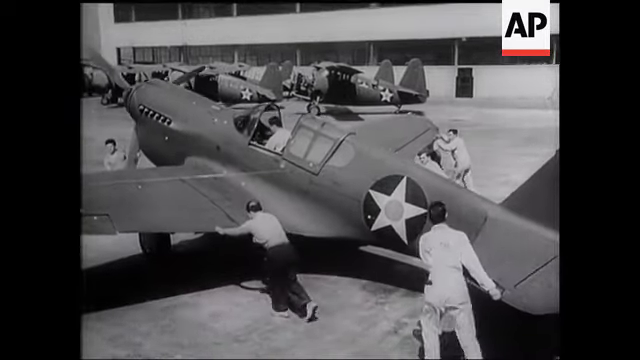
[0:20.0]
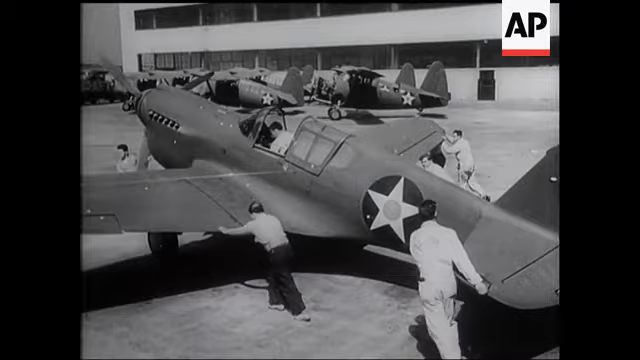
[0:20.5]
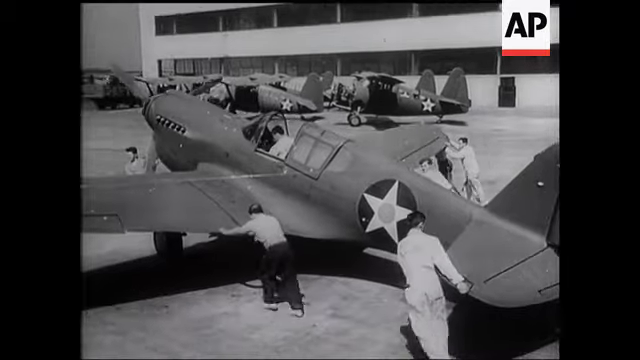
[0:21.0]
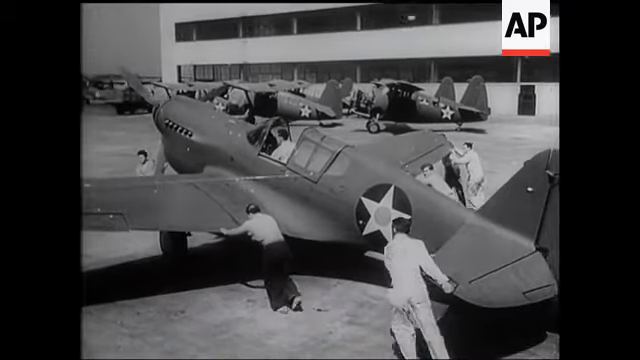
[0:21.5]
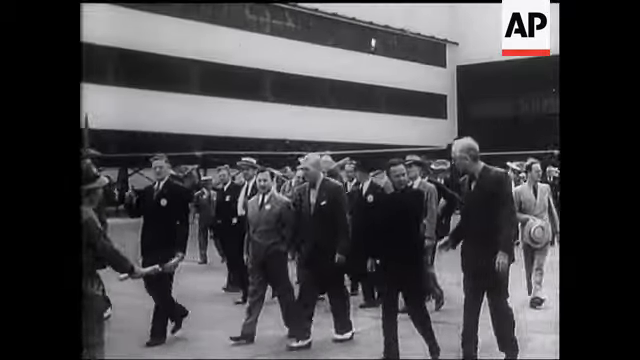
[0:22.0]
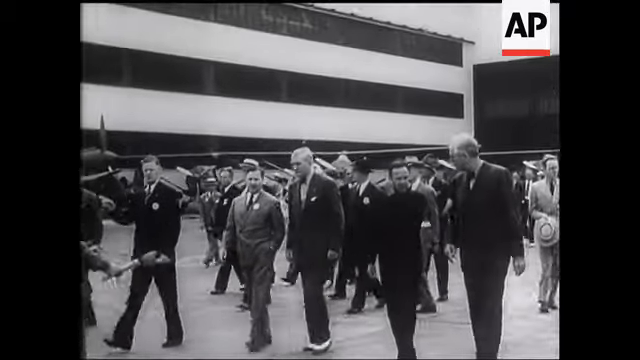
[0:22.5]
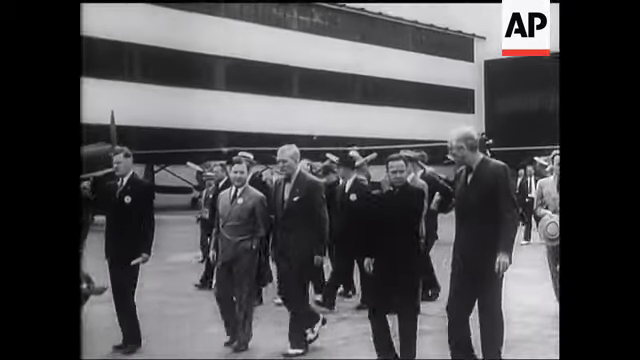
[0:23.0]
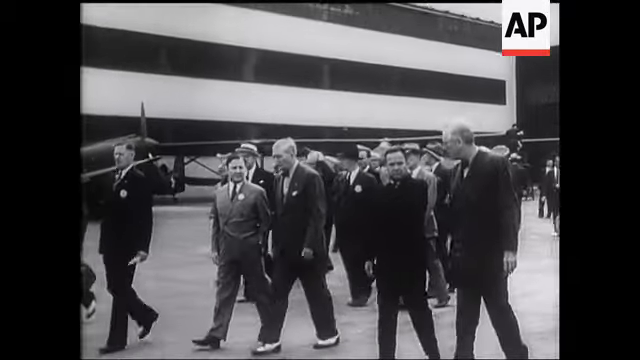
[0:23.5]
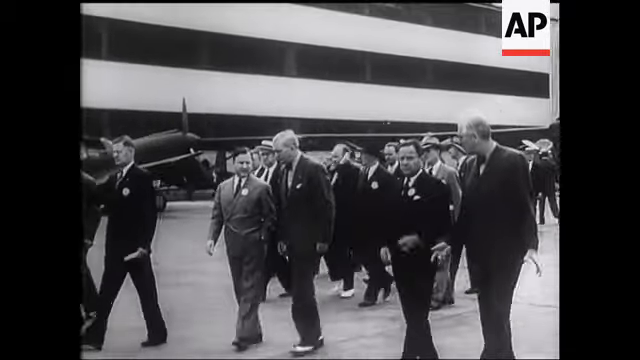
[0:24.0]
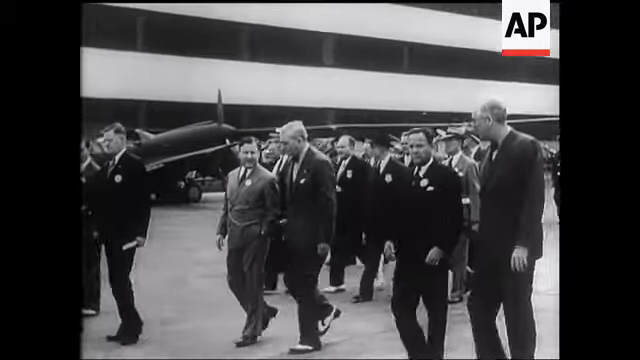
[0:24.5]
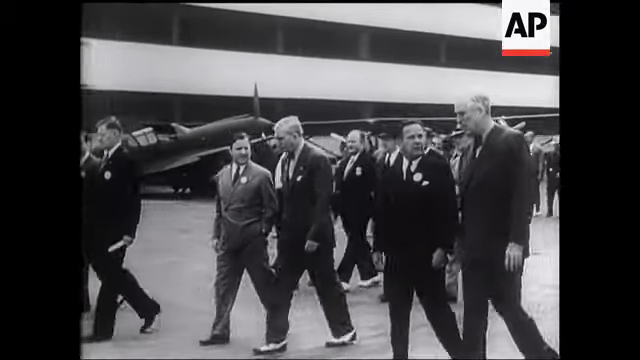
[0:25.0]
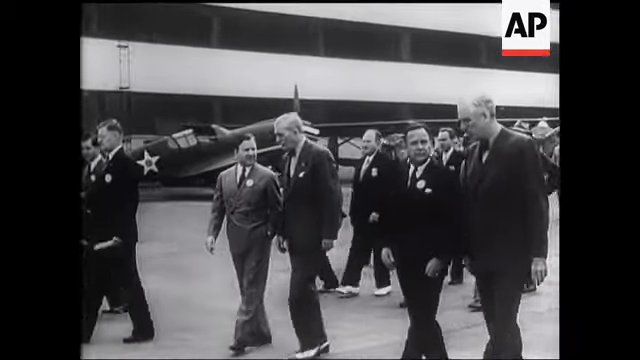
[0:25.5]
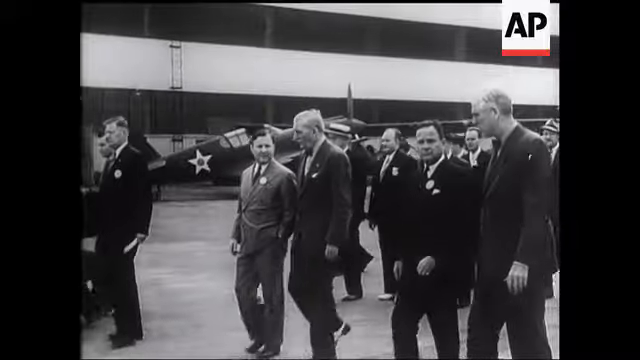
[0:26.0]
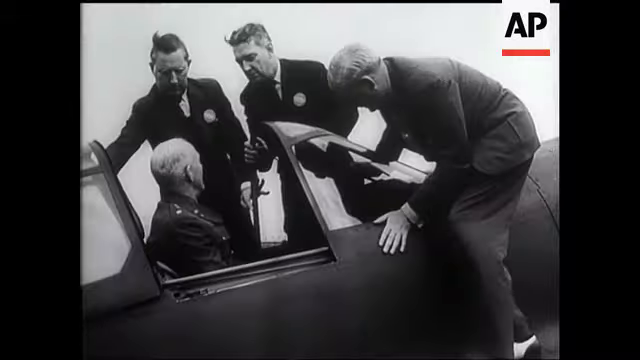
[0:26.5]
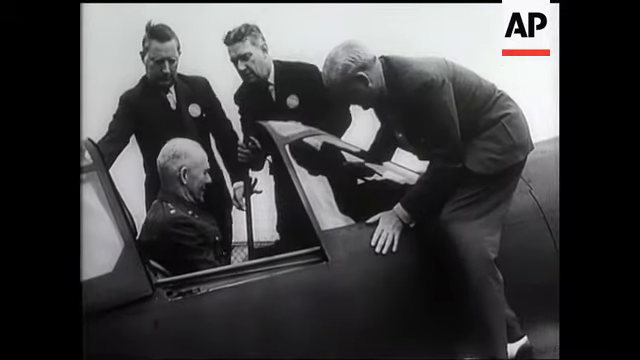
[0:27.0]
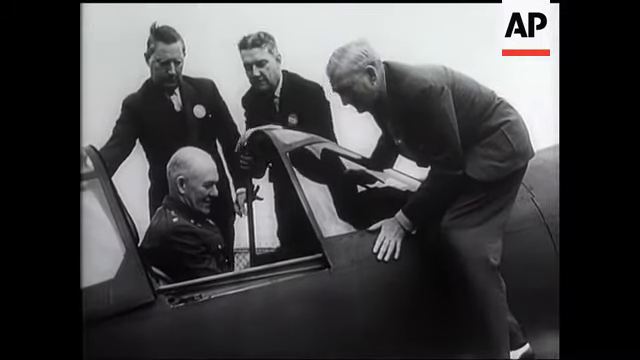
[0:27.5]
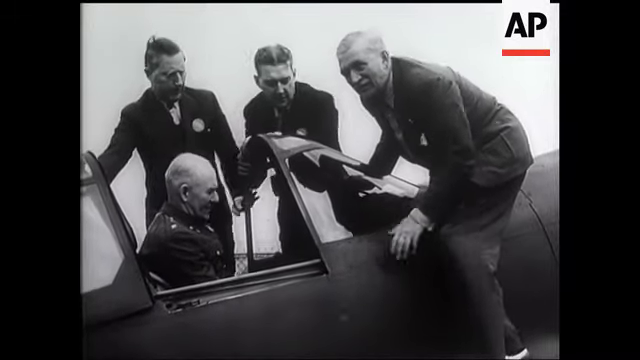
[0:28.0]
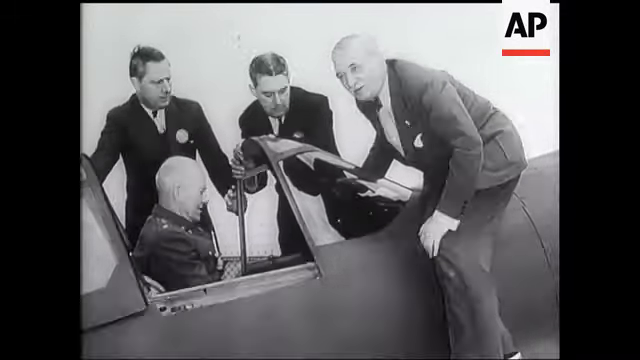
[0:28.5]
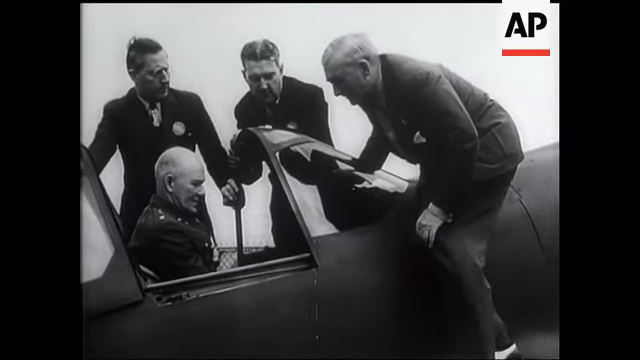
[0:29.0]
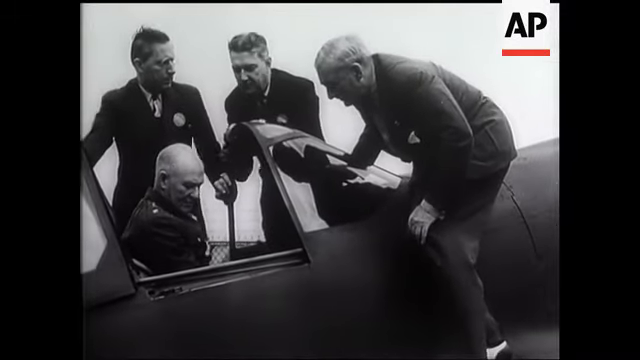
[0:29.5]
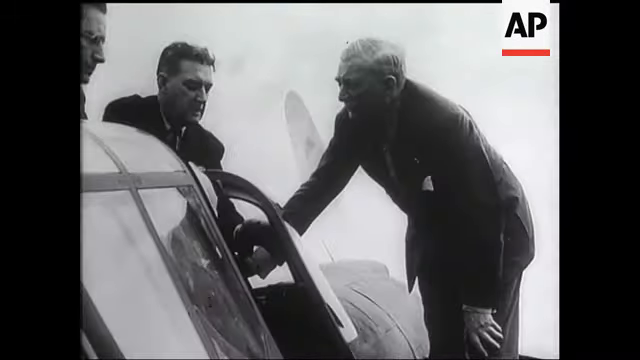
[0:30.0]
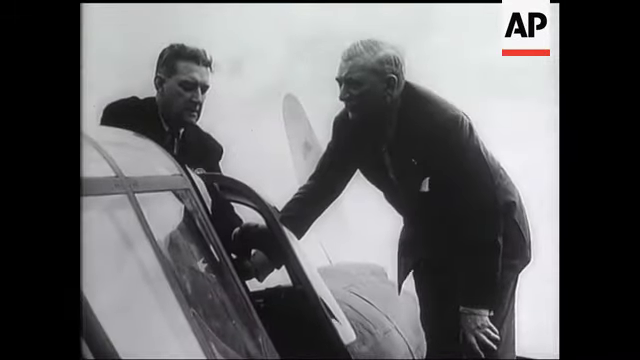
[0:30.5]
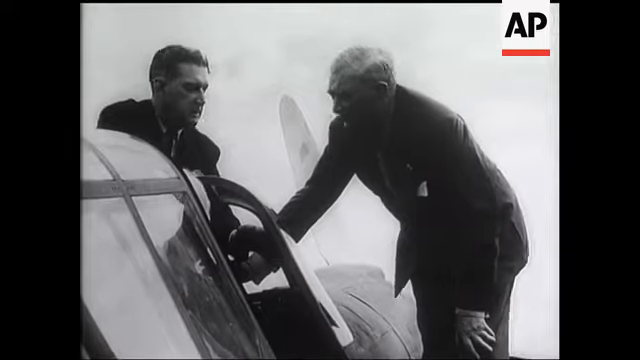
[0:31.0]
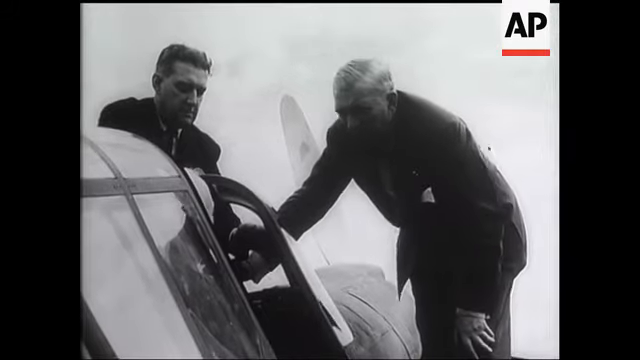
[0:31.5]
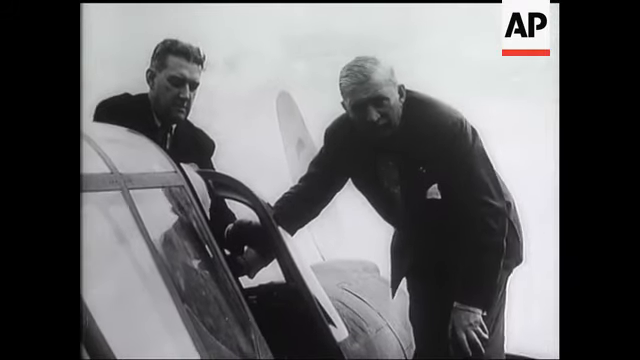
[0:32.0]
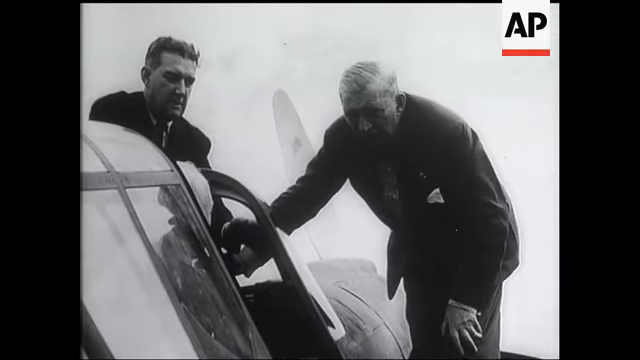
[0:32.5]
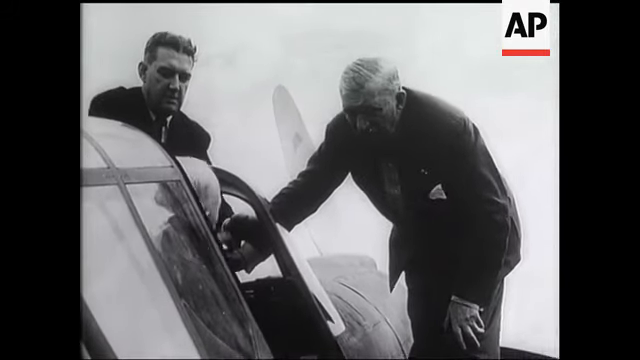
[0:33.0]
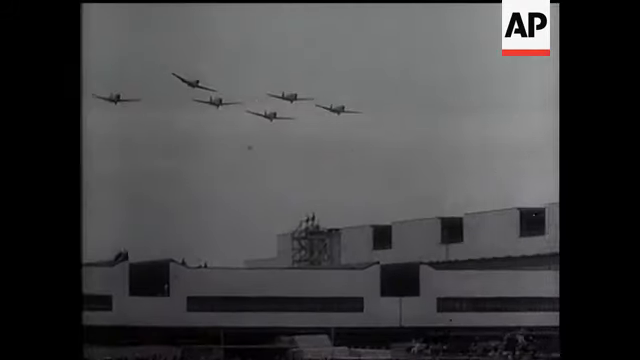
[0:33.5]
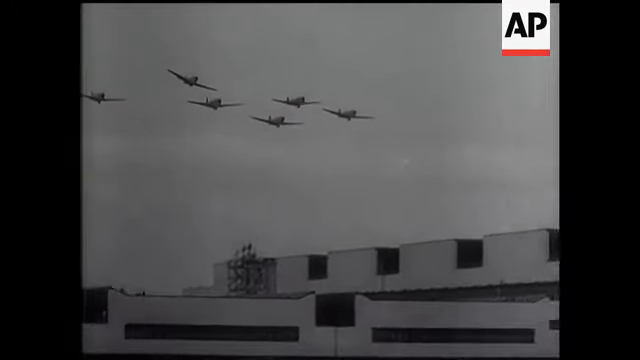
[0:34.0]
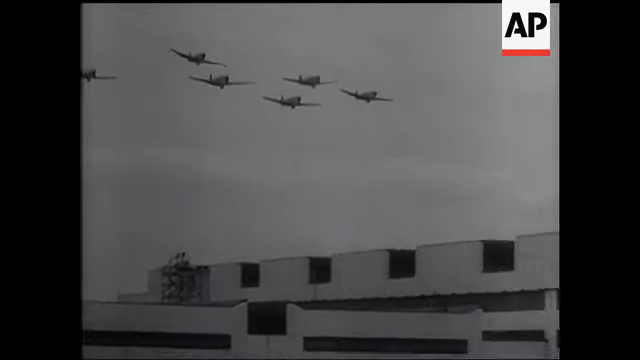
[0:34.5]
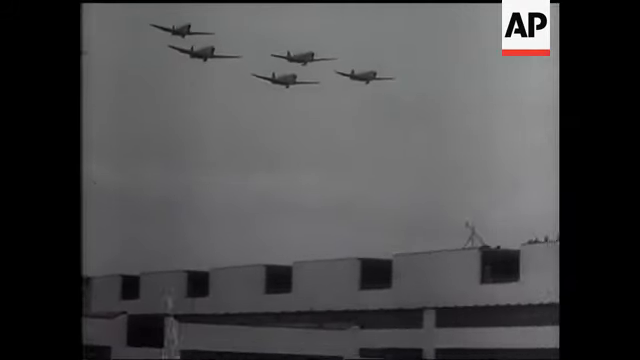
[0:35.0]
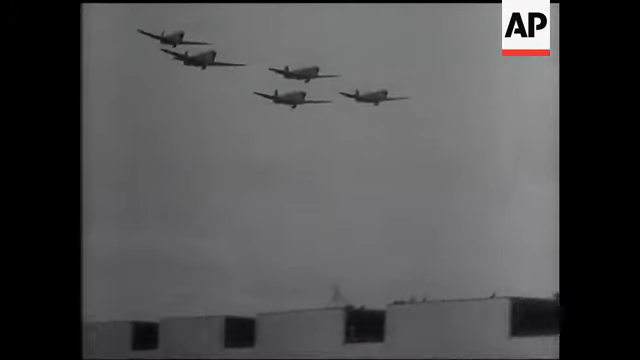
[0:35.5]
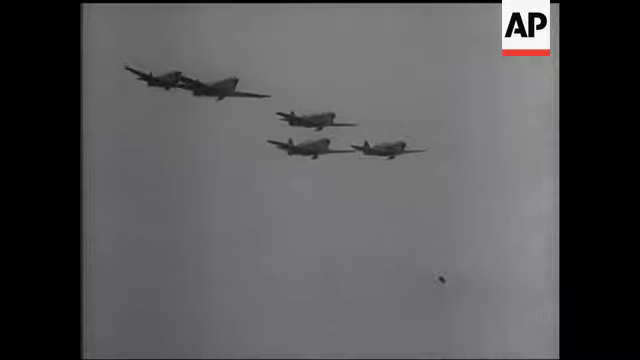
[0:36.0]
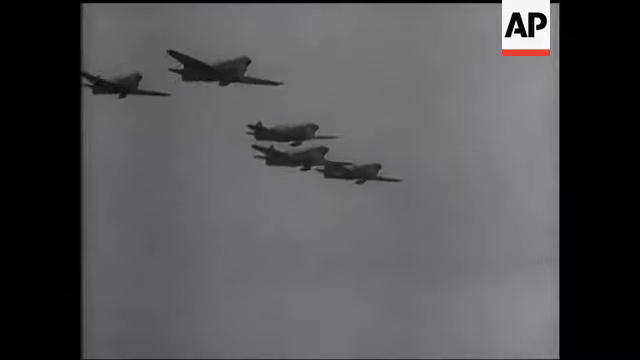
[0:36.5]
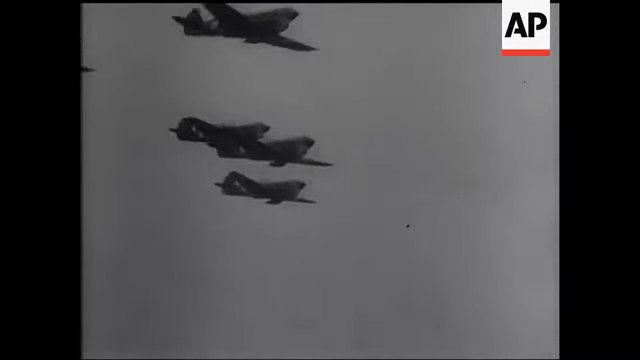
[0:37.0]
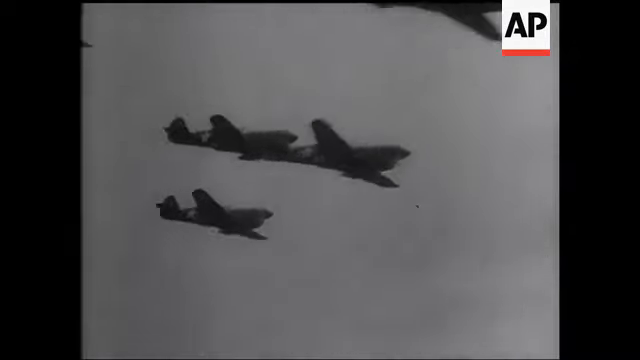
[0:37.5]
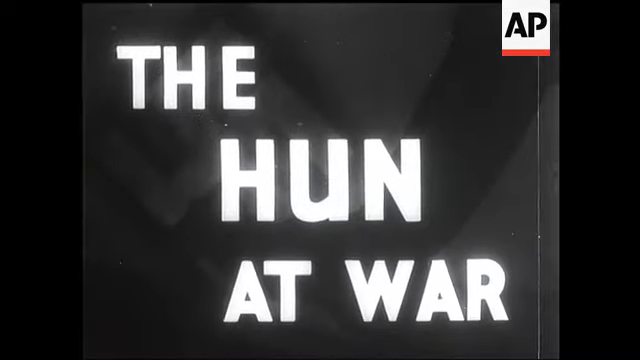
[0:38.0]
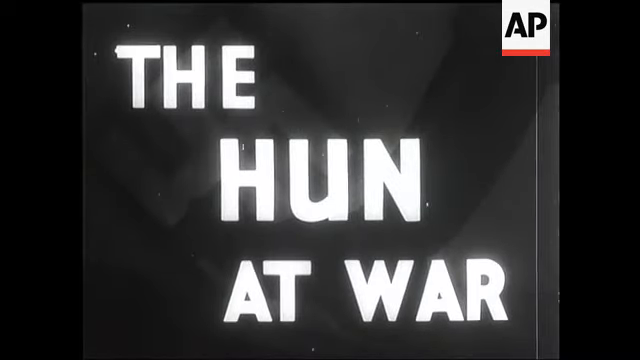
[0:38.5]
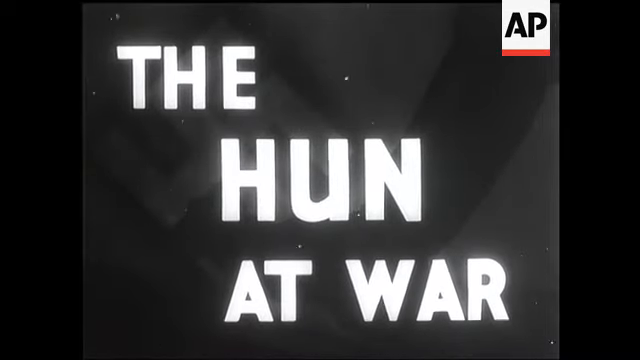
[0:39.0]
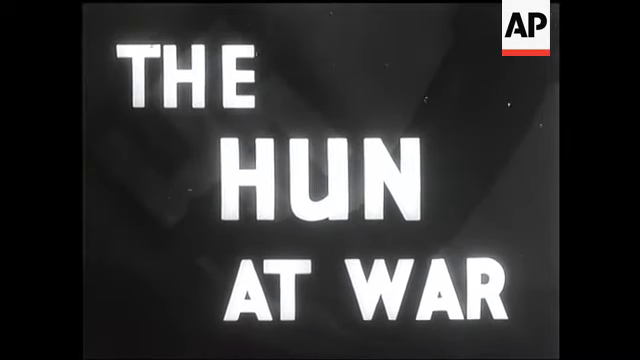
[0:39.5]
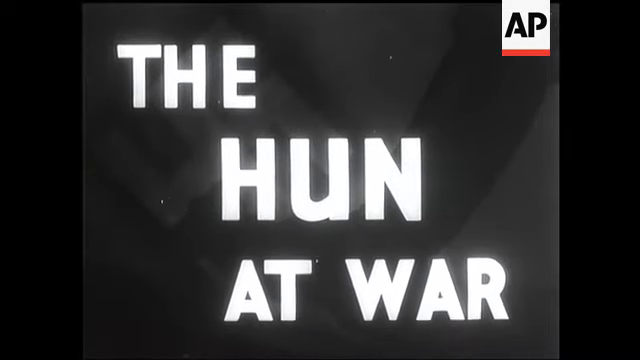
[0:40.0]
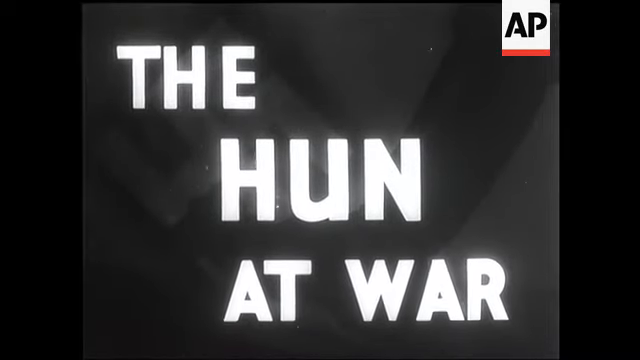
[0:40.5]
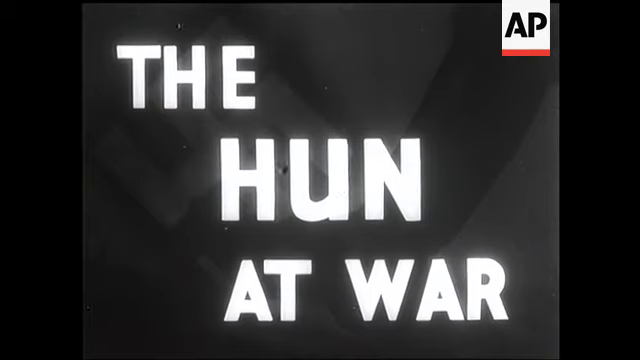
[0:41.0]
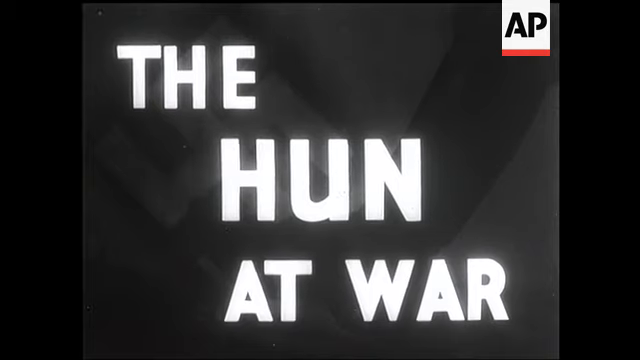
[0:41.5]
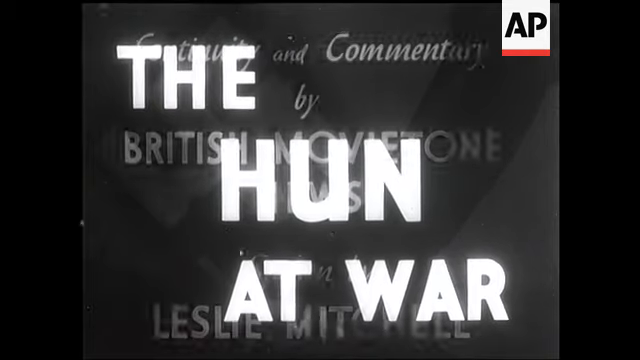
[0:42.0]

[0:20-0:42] A group of men push a Tomahawk plane out of an aircraft hangar. One man pulls the plane by one of the propellers at the front, a man is sat in the cockpit, and several men push the wings and tail as they walk forward with the plane. More planes are parked at the top of the screen. The scene moves to a large building, outside which a group of men in suits and ties walk along, some chatting together; some have badges on their lapels, and some of the men turn their heads to talk to the person next to them. Another aeroplane follows, with a man in an army jacket sat in the cockpit. Another man is stood on the outside of the plane looking into the cockpit window at the front, and two men on the far side of the aeroplane look to talk to the man in the cockpit. One man's hair is blowing in the wind, and both have badges on their left lapels. The man in the cockpit lowers his head, and a camera flash goes off as a photograph is taken. The men are then seen from a different angle at the front of the plane, looking down into the cockpit. Six aeroplanes fly over the building in formation, followed by a close-up of them flying. At the end of the video, a title page says "The Hun at war" in white letters, with AP in the top right-hand corner. Flecks of light appear on the screen, showing the age of the footage, and a faded image of a swastika is in the grey background.